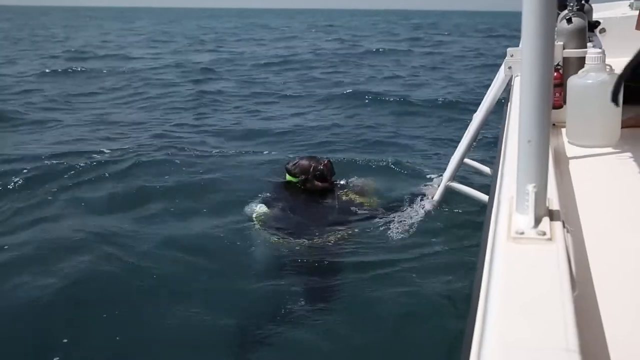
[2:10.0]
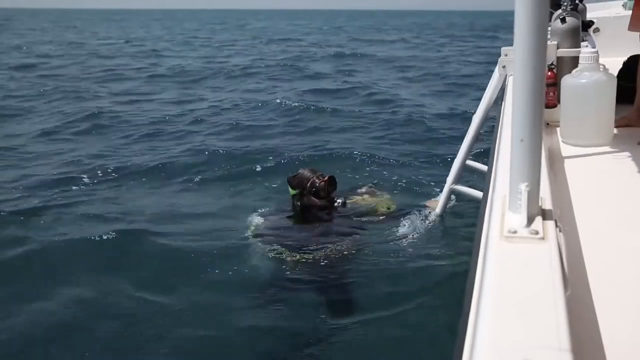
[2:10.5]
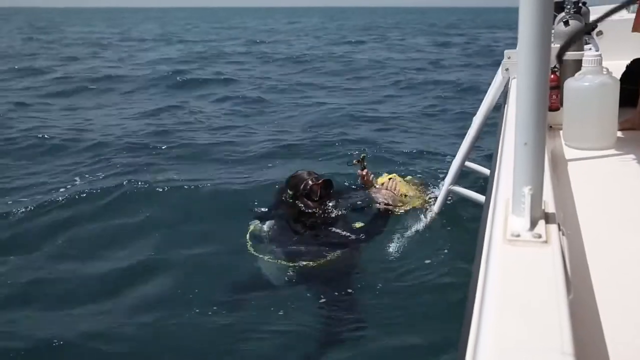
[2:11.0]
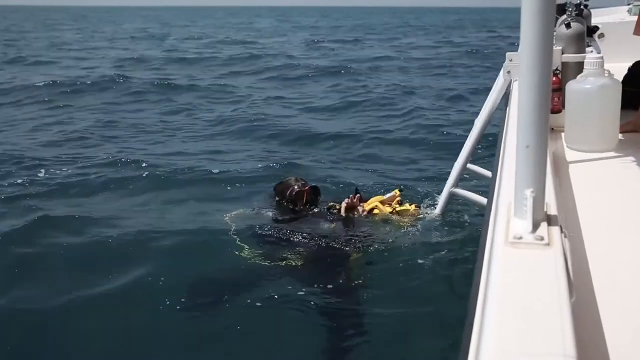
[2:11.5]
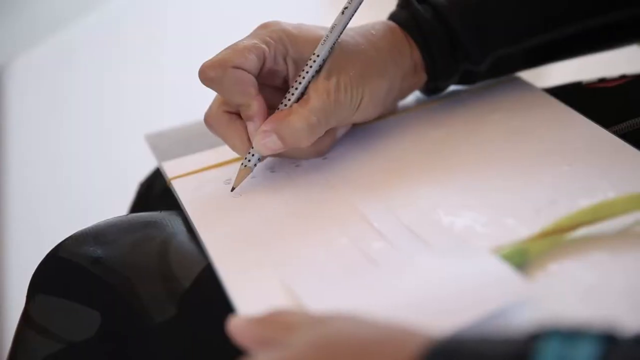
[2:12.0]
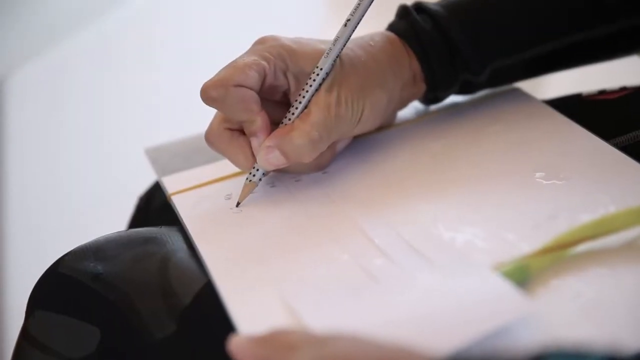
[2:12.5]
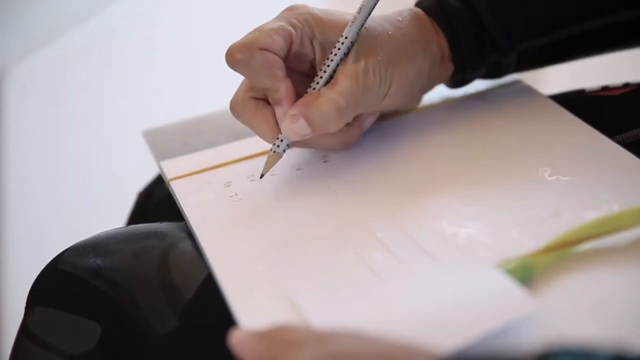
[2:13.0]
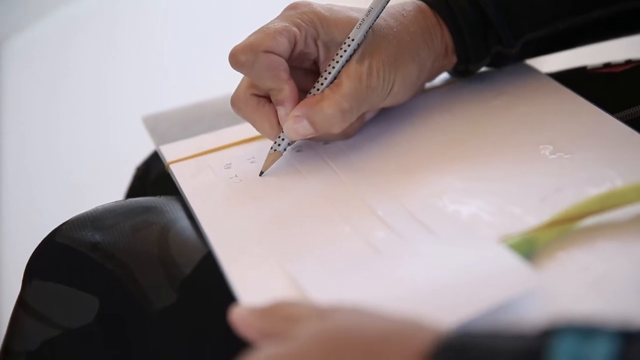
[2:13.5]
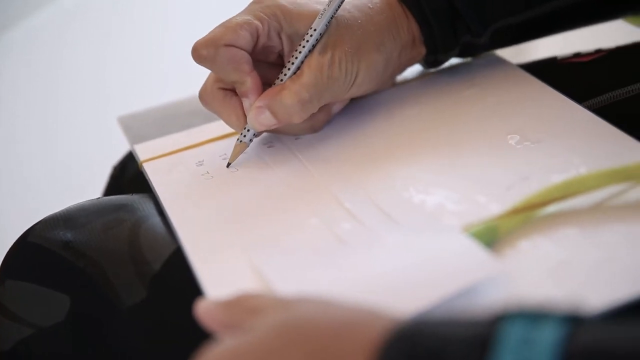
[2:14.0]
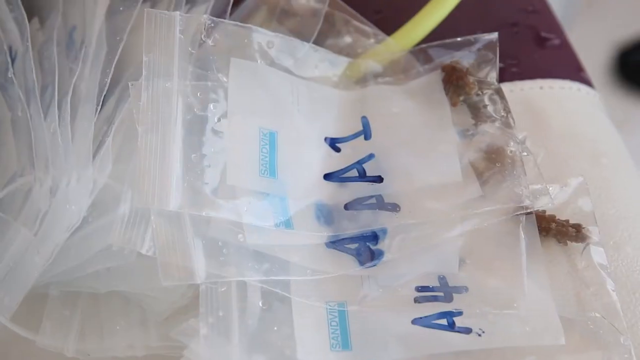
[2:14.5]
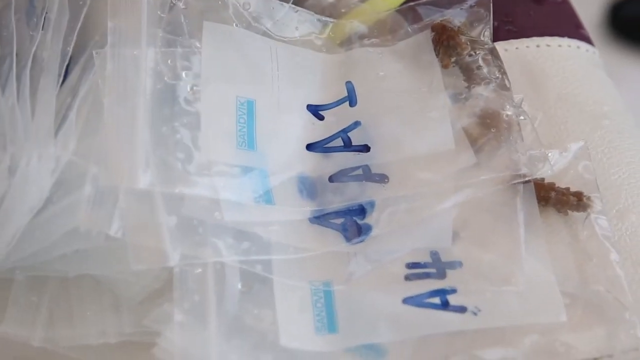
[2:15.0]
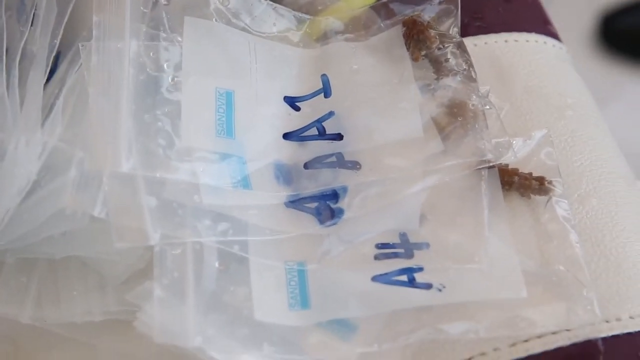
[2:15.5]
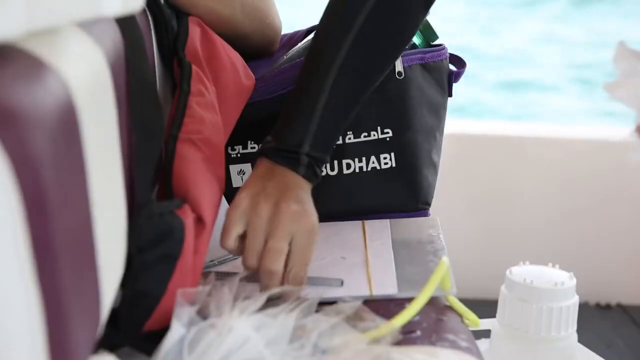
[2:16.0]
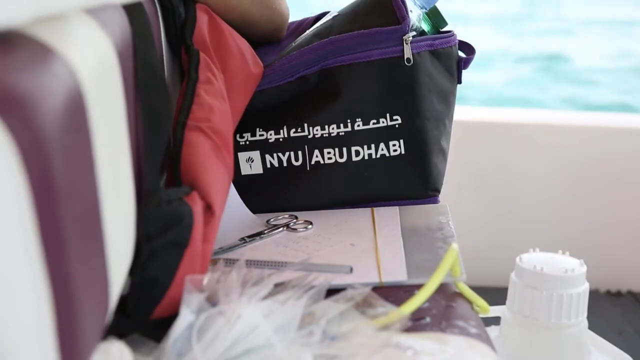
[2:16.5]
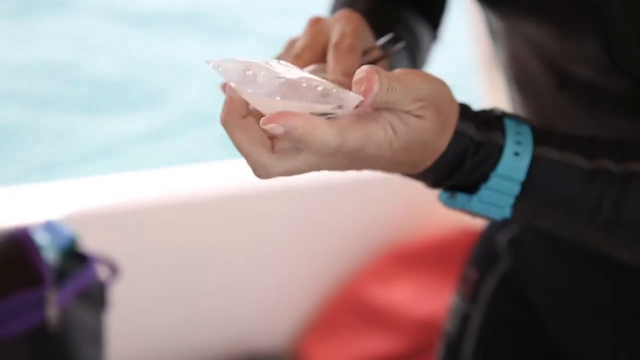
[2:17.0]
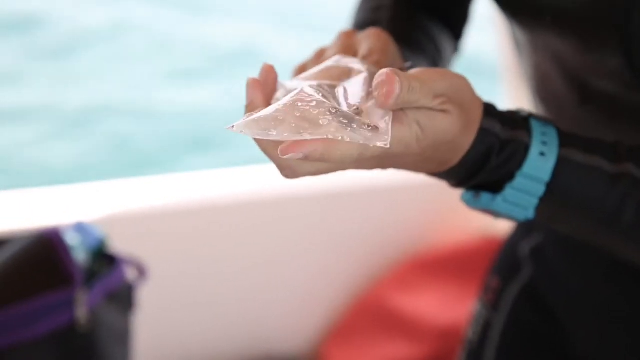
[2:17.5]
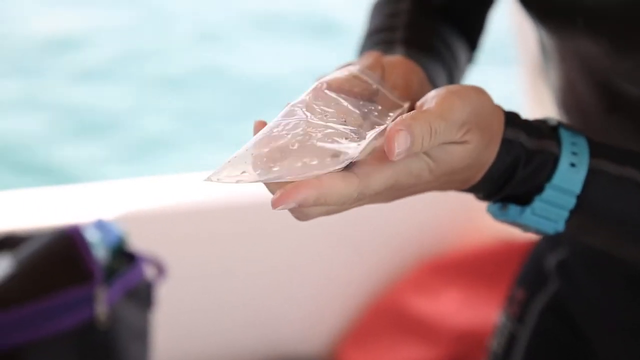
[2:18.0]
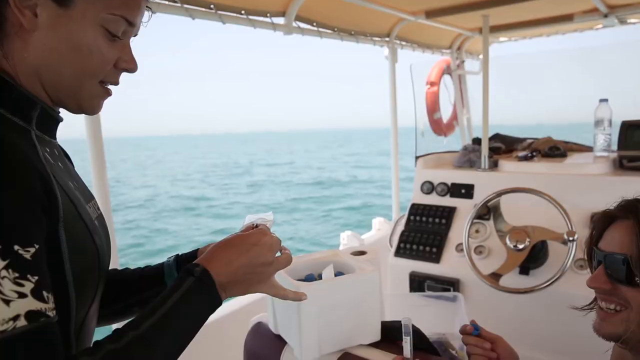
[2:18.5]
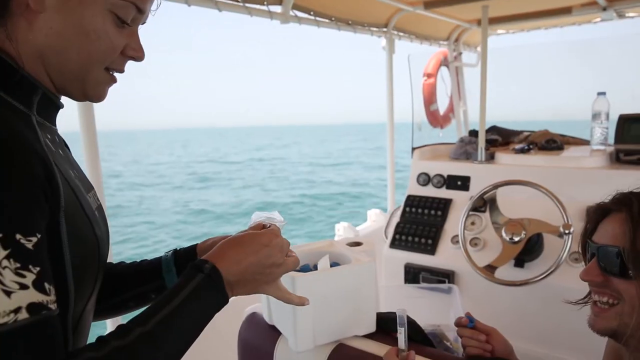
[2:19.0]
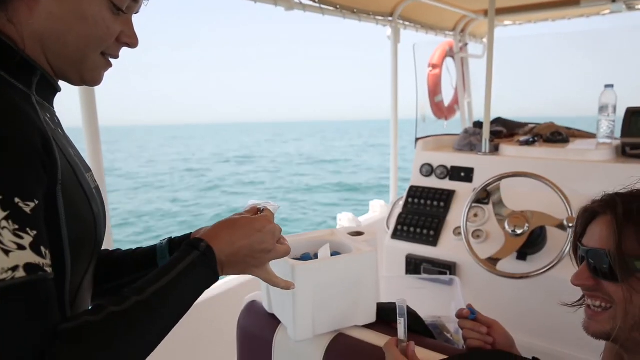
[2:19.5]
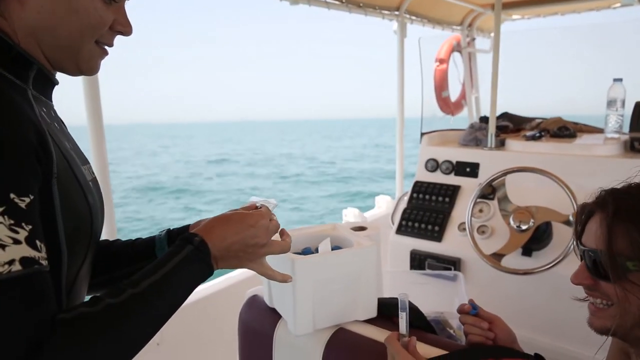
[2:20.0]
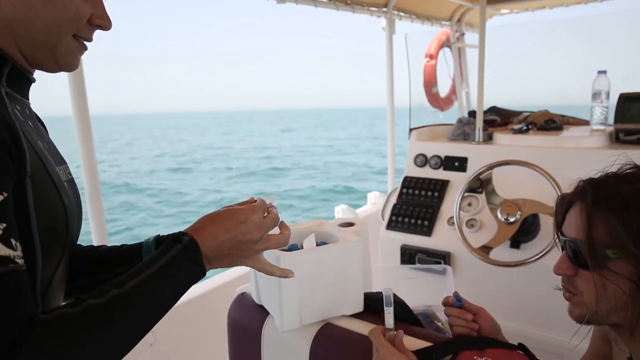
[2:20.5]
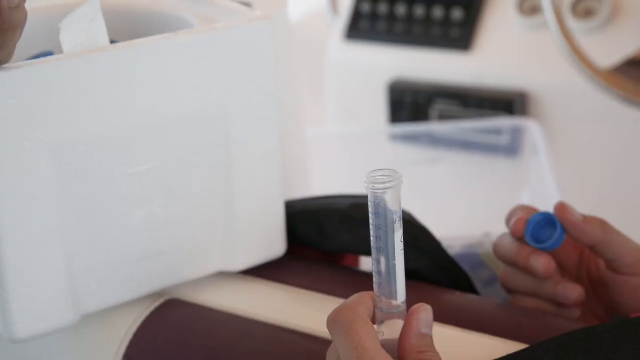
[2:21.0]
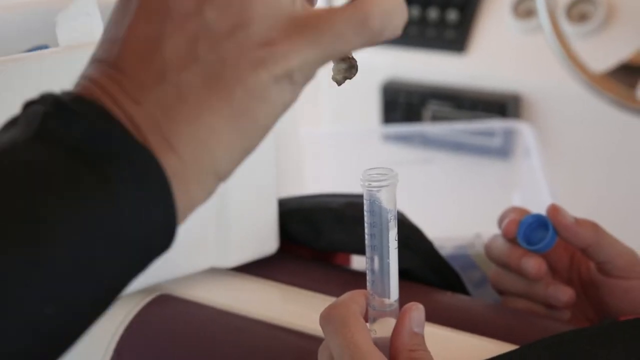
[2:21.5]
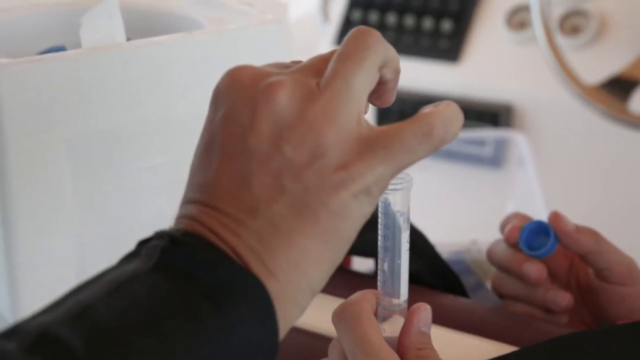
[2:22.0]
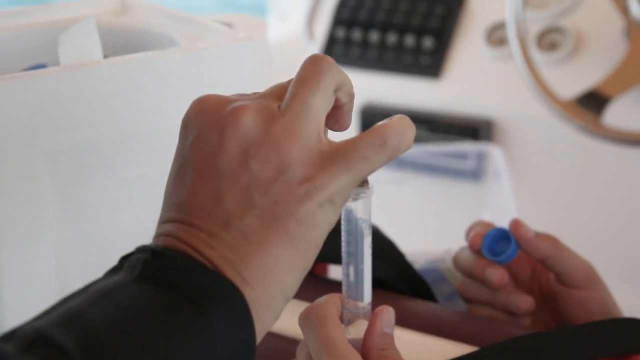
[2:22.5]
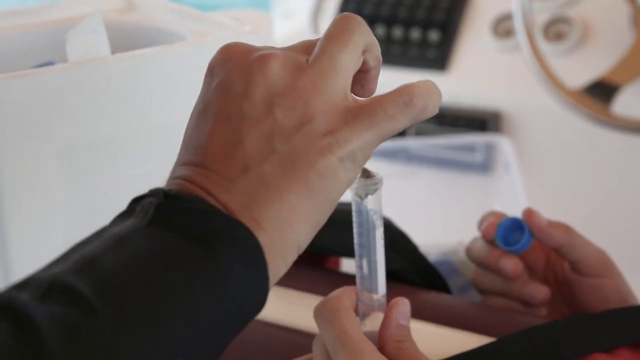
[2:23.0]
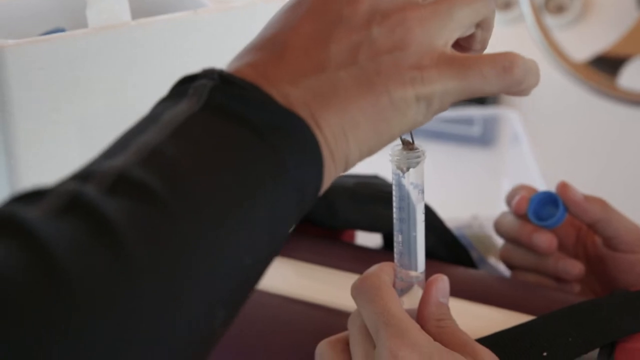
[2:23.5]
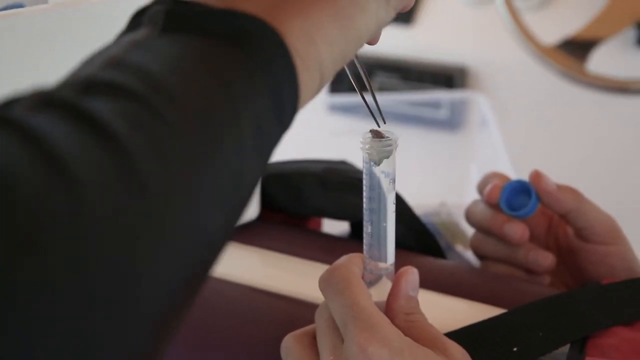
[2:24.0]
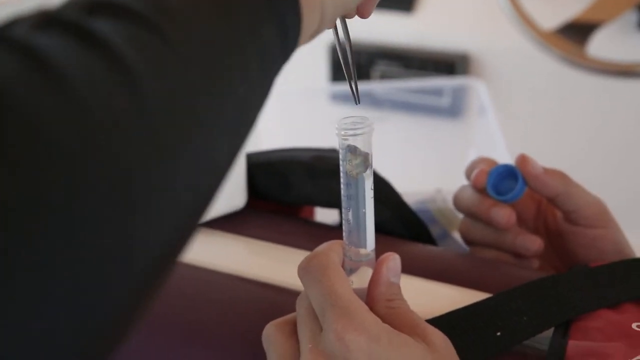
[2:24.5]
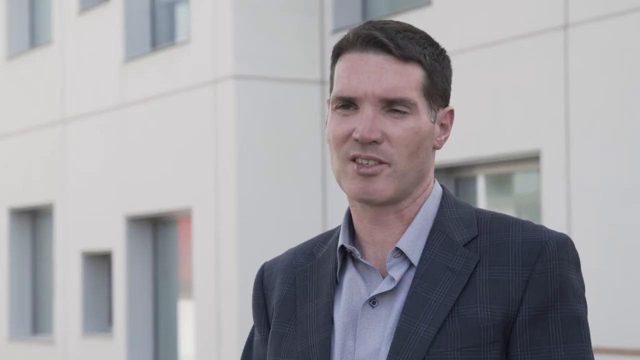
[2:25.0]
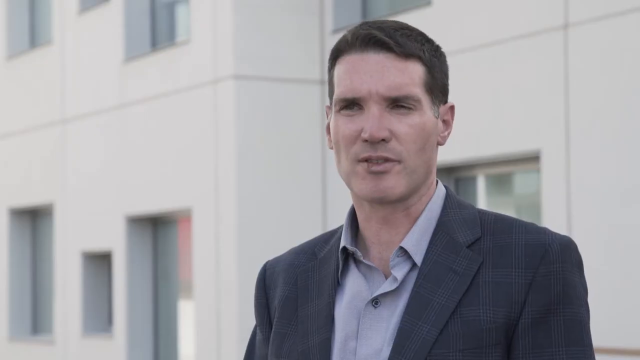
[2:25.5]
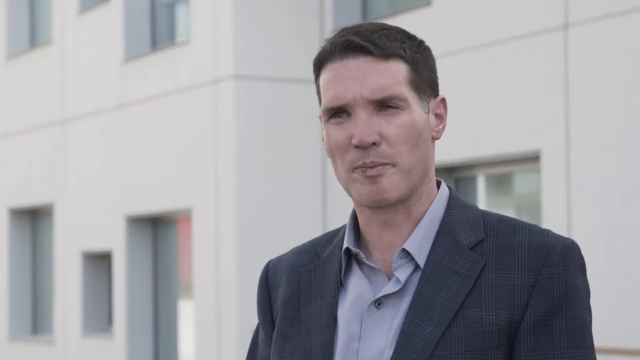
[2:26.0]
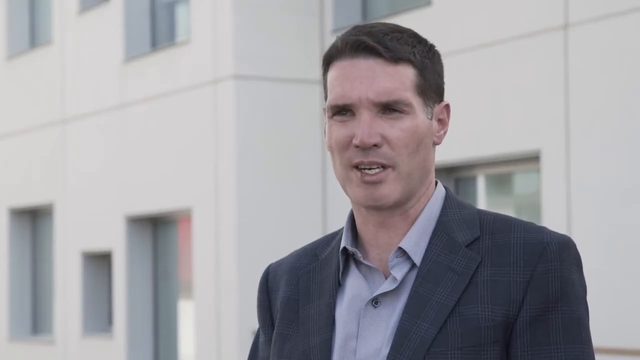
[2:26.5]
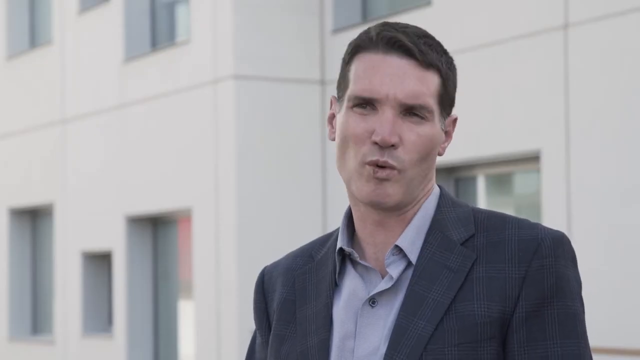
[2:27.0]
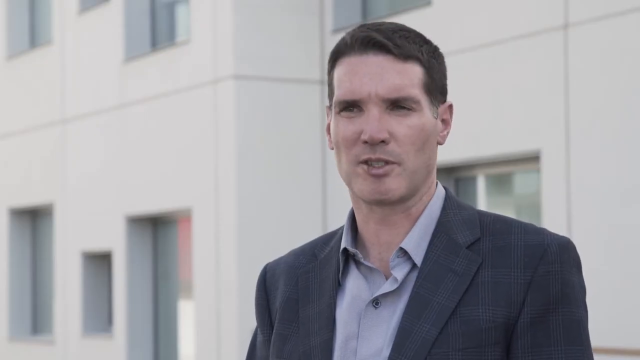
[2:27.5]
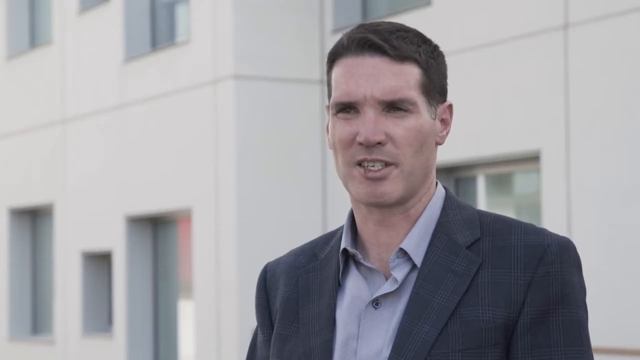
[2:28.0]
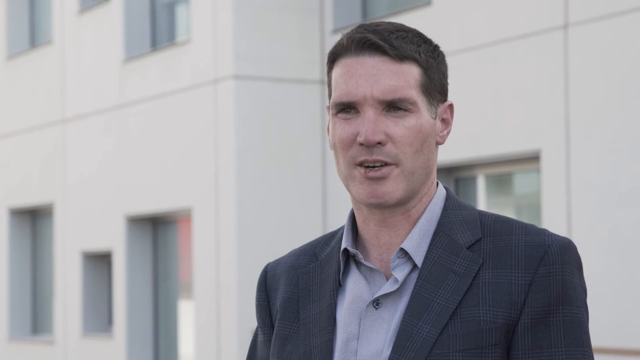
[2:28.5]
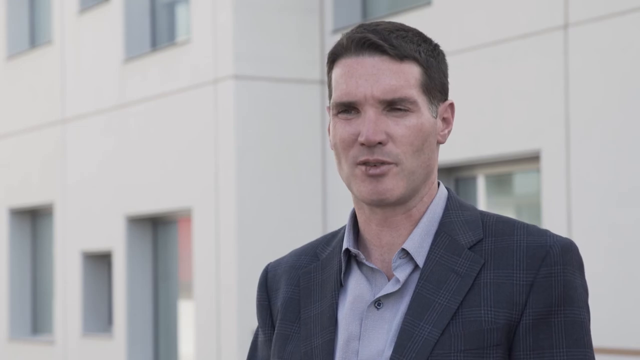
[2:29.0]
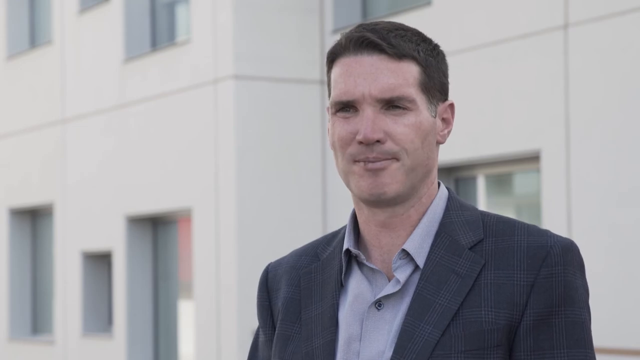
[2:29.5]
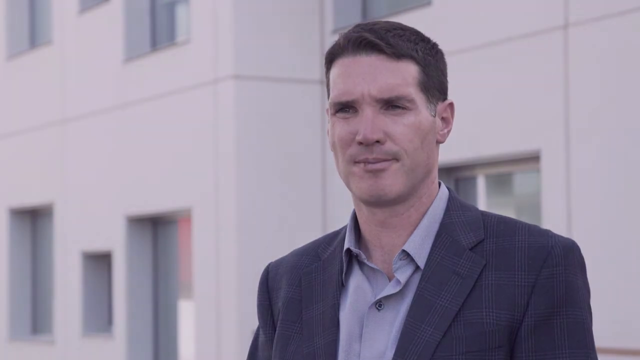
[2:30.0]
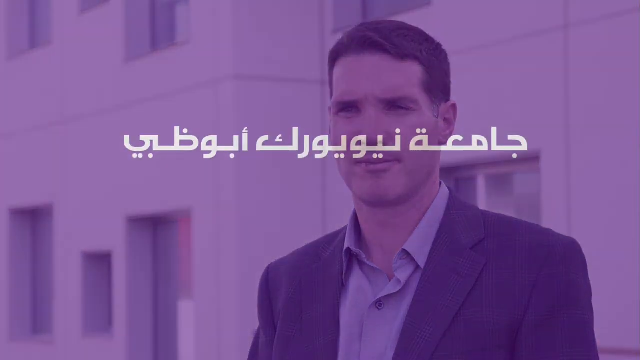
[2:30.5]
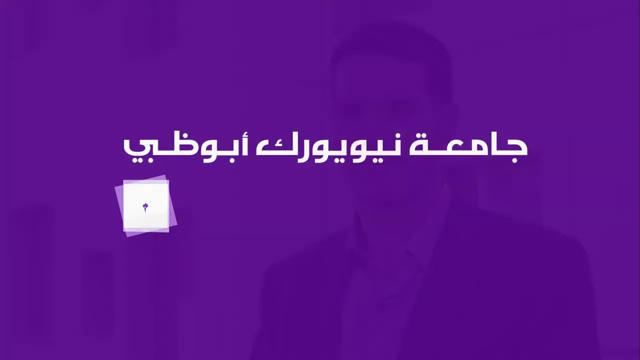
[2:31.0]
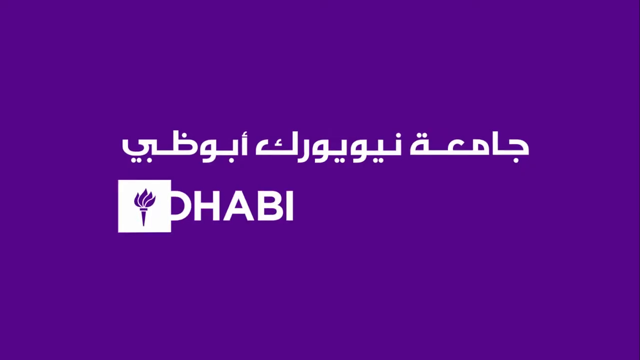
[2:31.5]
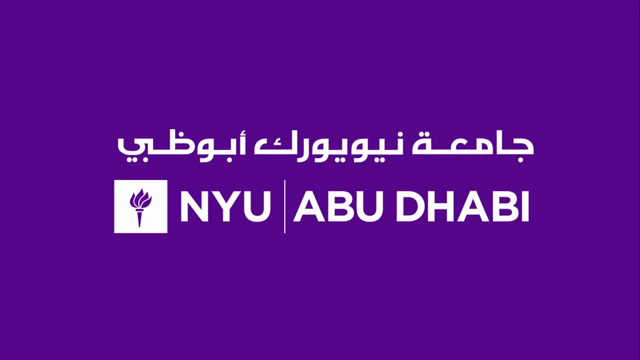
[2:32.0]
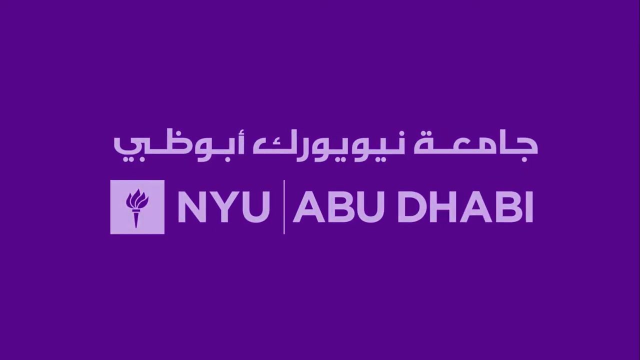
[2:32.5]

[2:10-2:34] A scuba diver is shown briefly, then they are sitting up on their boat with a notebook of some sort, writing in it with a pencil as the camera zooms in. Plastic Ziploc bags are shown, including a bag that says "Abu Dhabi". Something that looks to be some sort of specimen from the ocean is put inside a Ziploc bag, and one person grabs something from a bag and puts it in a test tube. The man in the suit speaks to the camera. The ending shot shows "Abu Dhabi" in white text on a purple background. Next to the words is a solid white box. There is a purple image or emblem that looks like either a feather duster or maybe a torch with fire in it, and above it is white text in an unrecognized language.